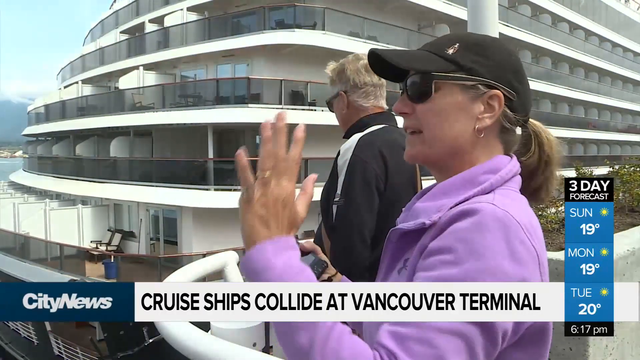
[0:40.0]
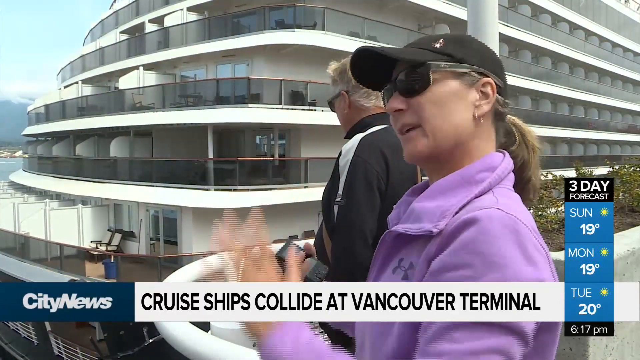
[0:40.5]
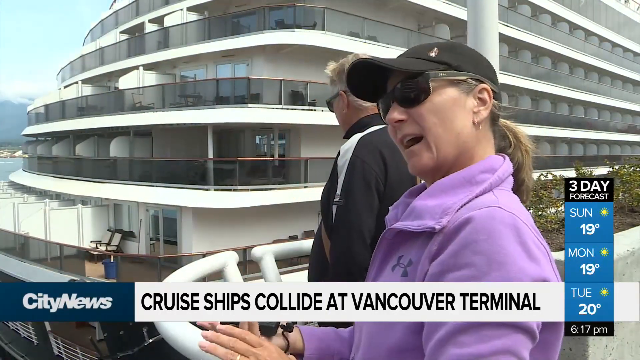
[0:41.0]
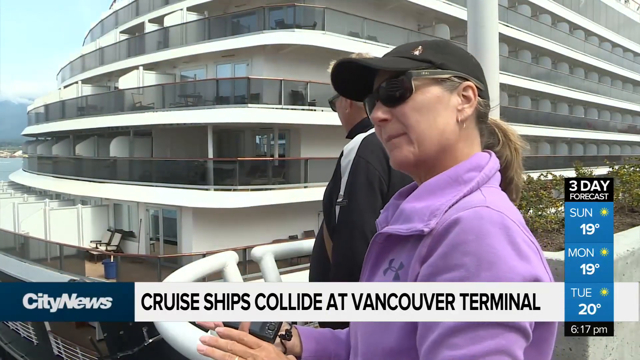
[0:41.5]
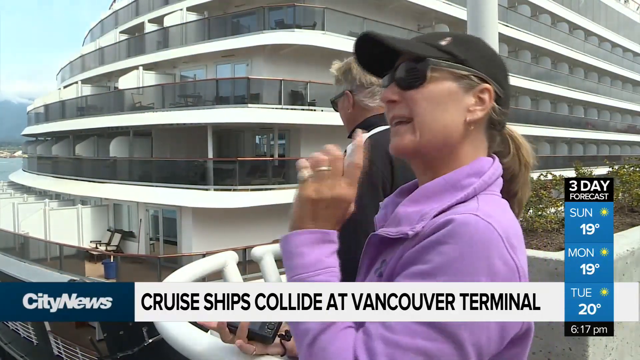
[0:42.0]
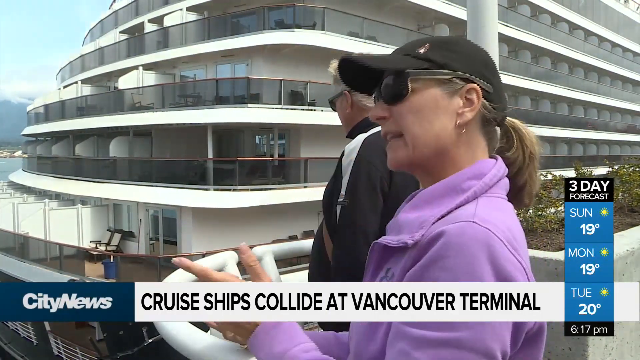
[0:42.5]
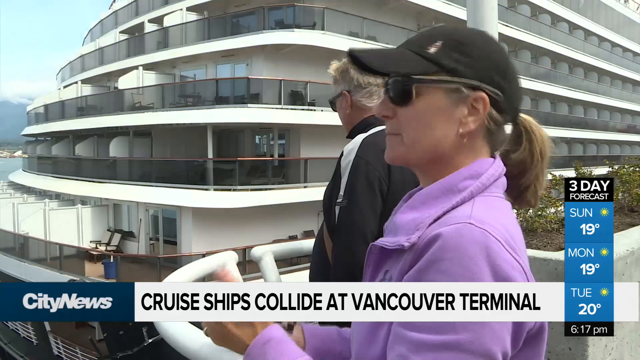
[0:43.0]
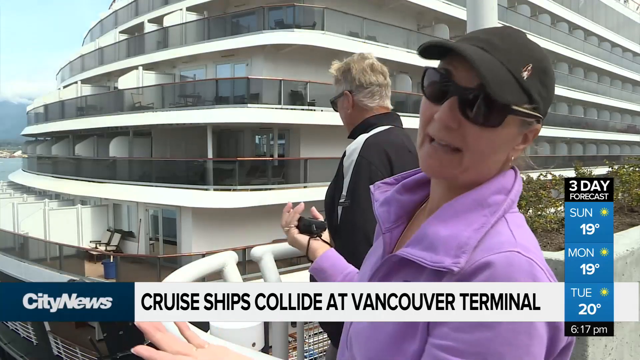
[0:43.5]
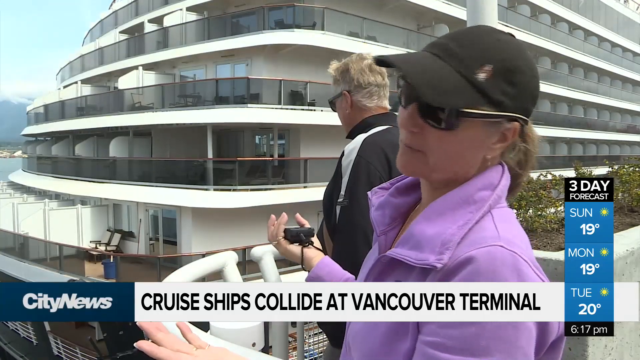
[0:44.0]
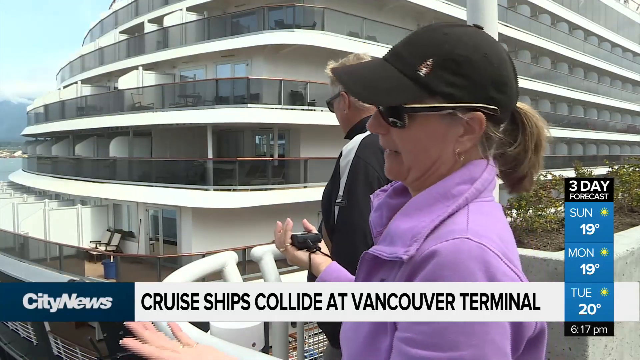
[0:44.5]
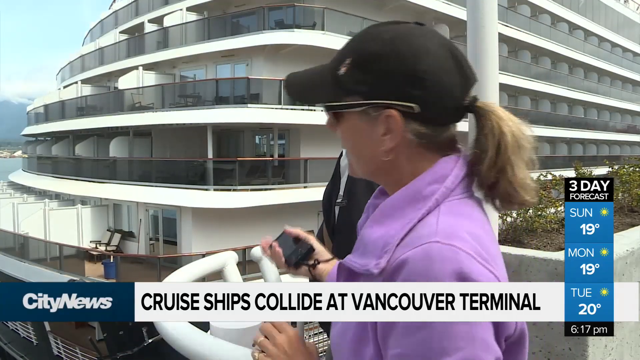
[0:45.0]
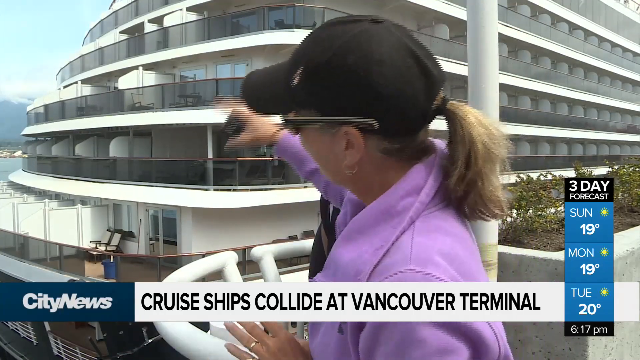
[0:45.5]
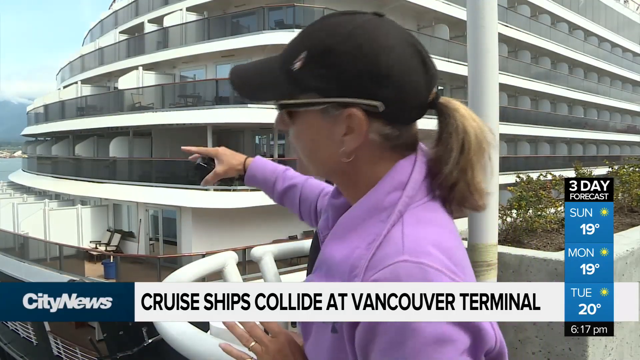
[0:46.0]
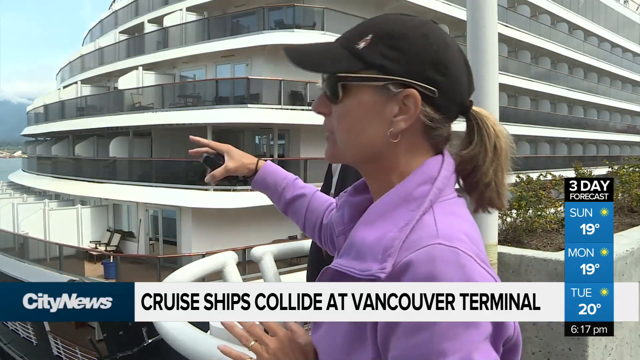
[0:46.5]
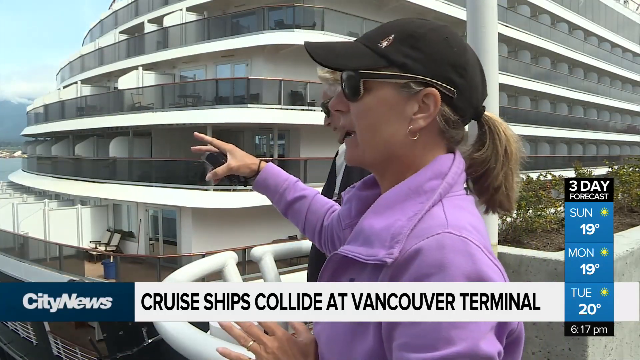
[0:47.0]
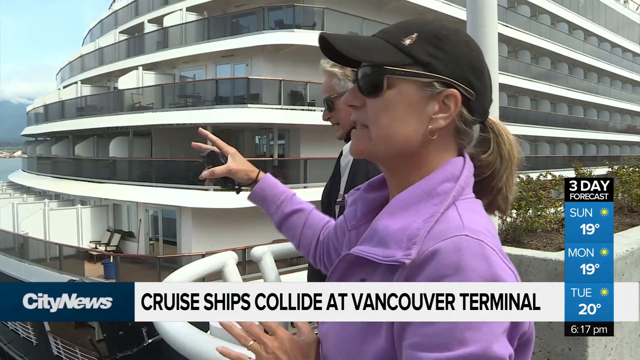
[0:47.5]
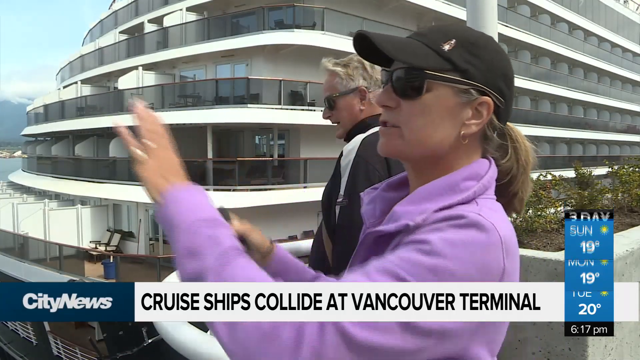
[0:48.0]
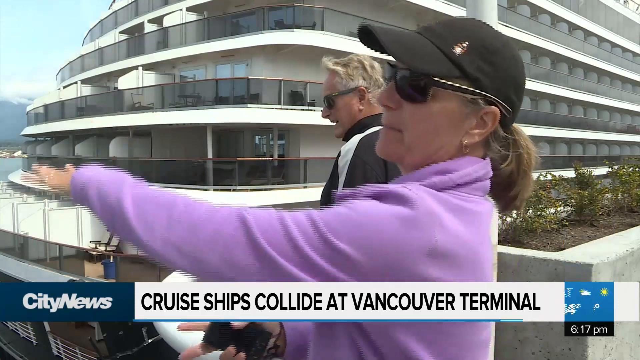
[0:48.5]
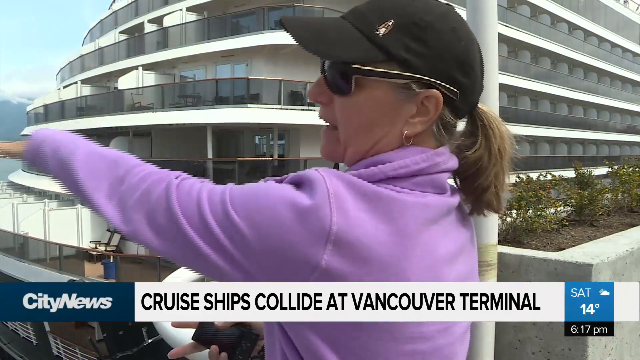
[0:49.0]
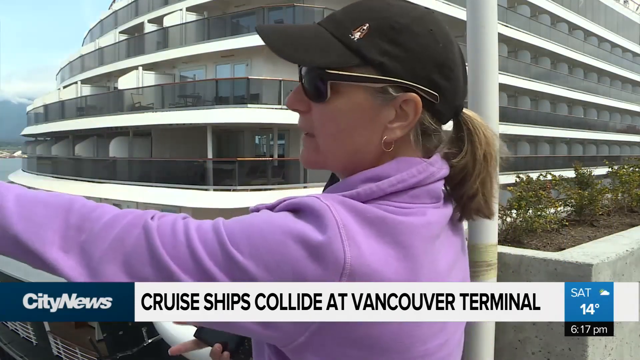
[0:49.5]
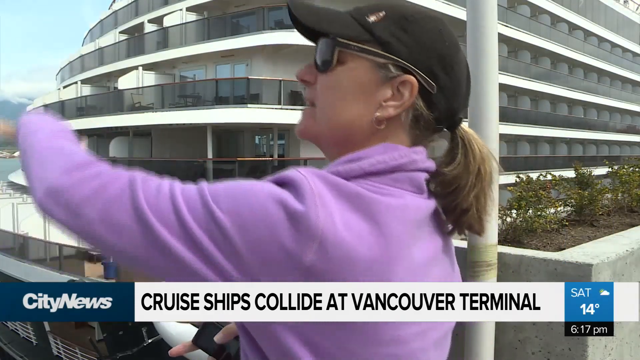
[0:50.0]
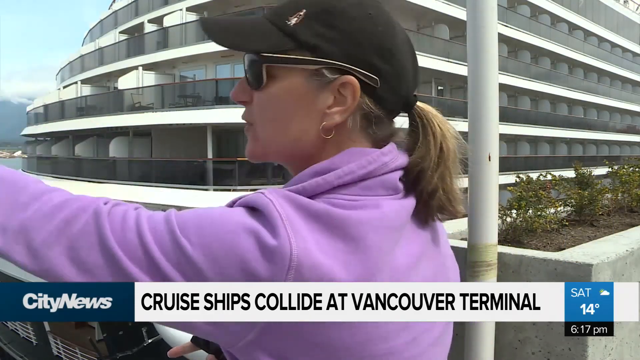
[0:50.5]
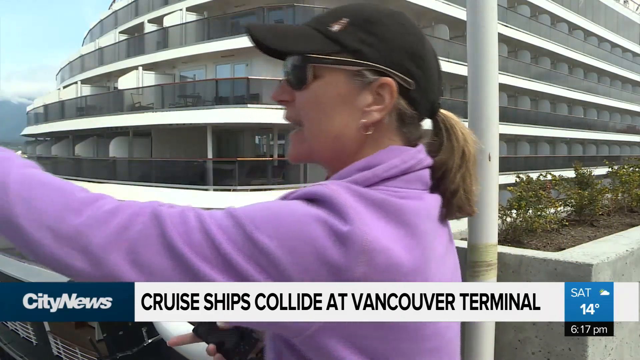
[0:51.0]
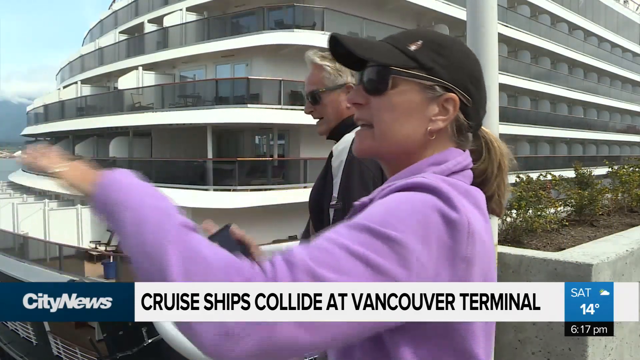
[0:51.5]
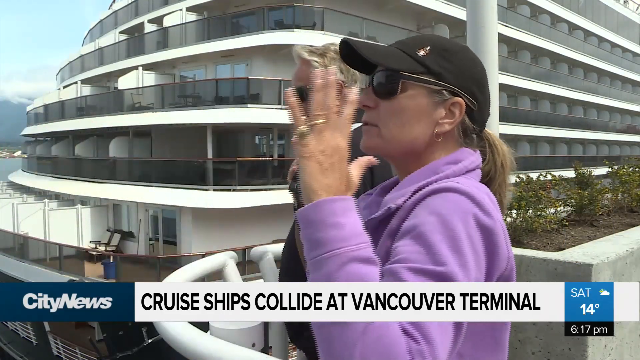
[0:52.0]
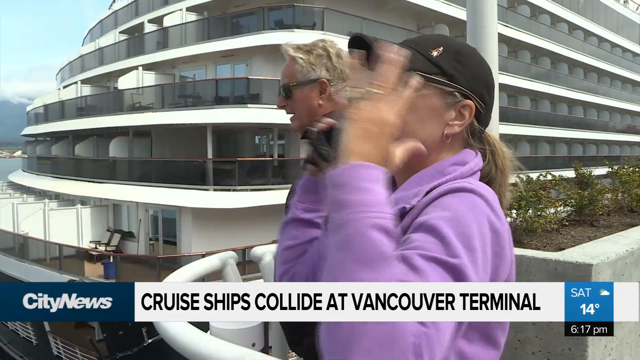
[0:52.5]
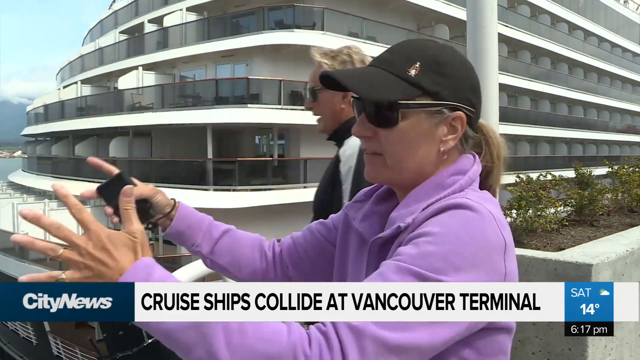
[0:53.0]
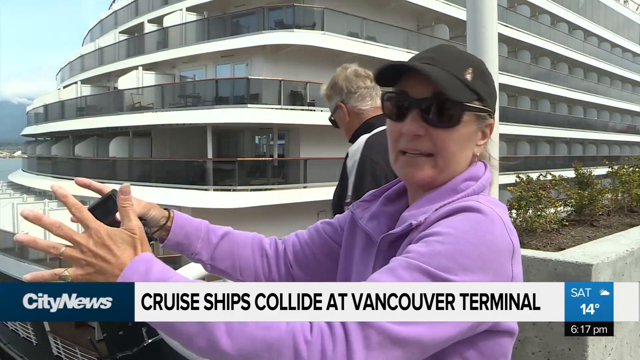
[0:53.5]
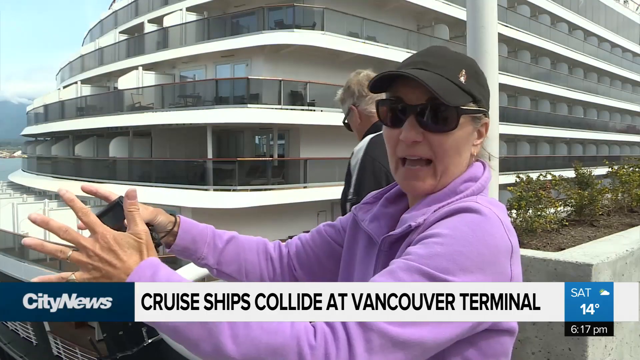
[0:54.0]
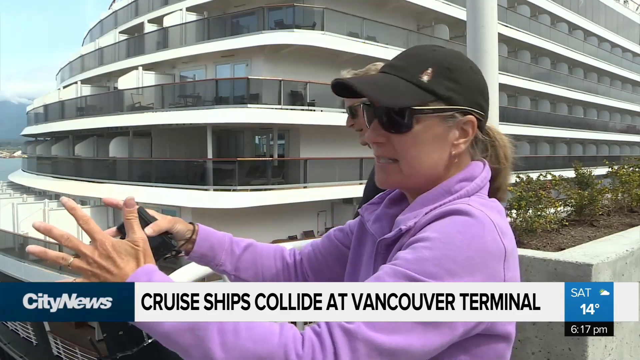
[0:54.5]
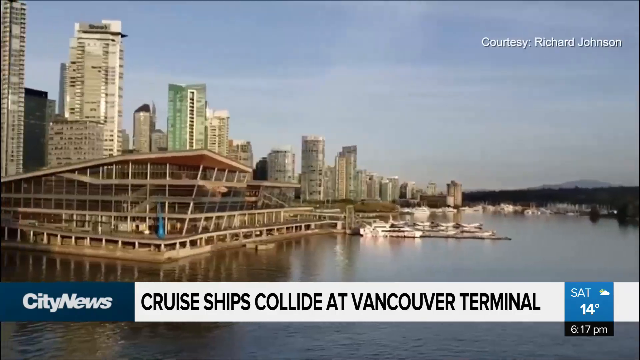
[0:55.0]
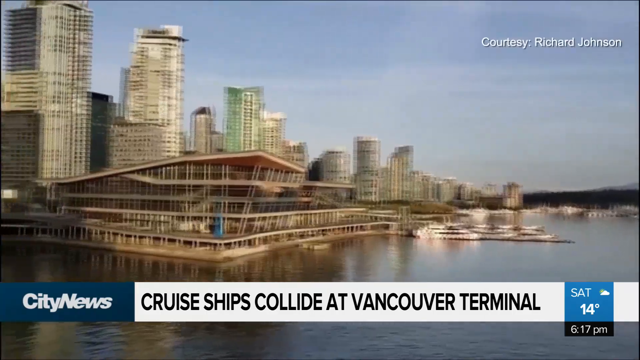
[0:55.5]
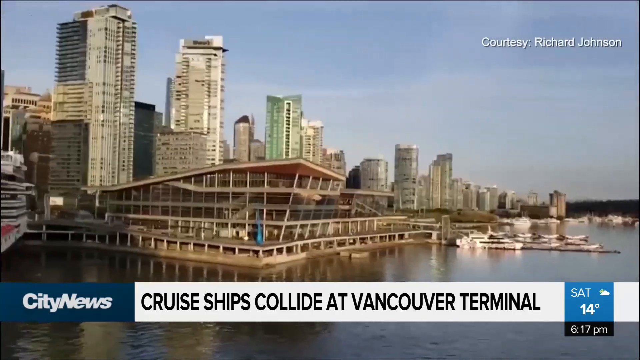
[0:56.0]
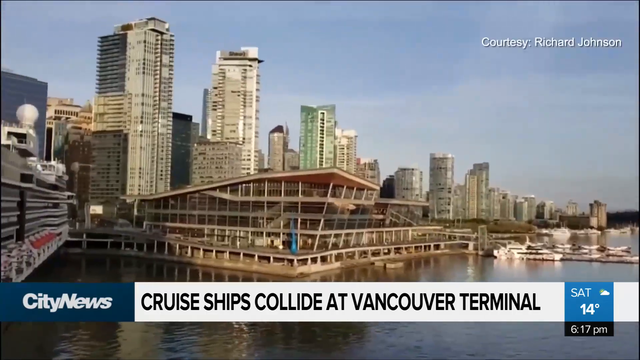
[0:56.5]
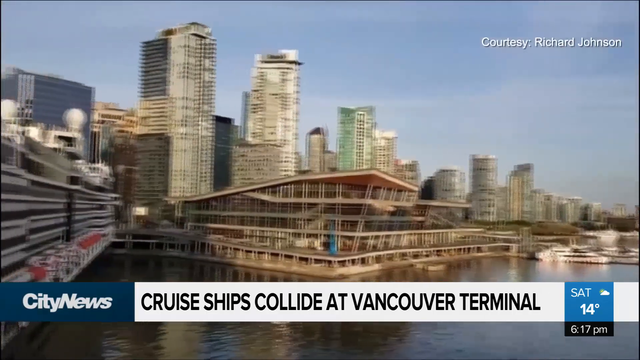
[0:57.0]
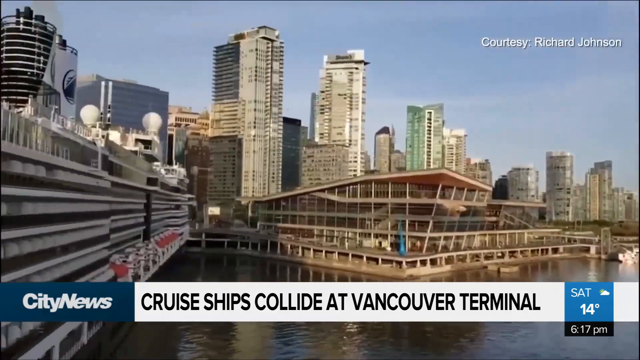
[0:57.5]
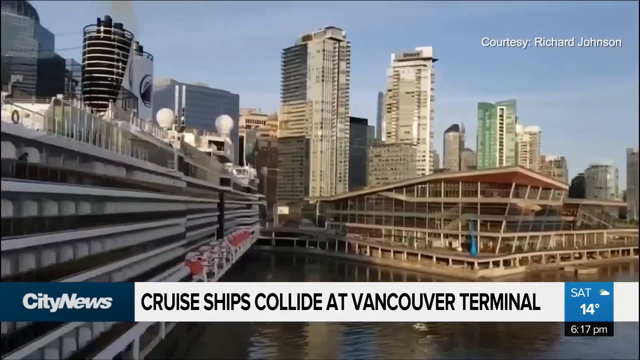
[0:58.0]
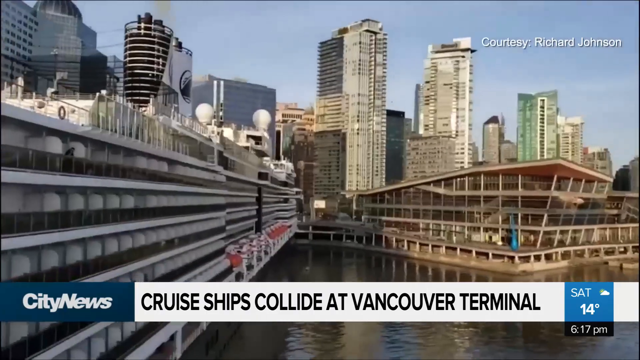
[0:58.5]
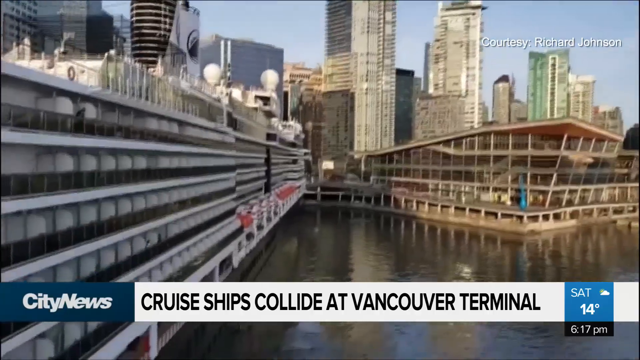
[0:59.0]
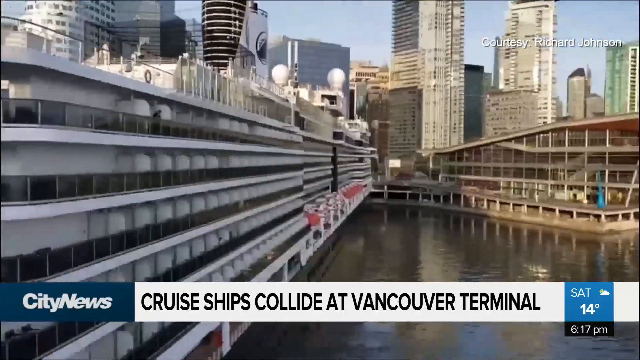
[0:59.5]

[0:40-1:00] The segment cuts to a couple describing what happened. The woman, in her 50s, wears dark sunglasses, a black baseball cap and a light purple sweat jacket, and has a ponytail. She is very animated, waving her hand as she talks. Her husband stands just behind her in a black tracksuit and dark sunglasses; he has grayish hair, is also in his 50s, and listens quietly. They stand at a railing on the dock, and behind them the white, five-level cruise ship, with railings at each level, slowly drifts away as they talk. The banner beneath reads "City News, cruise ships collide at Vancouver Terminal". After five seconds, the video cuts to the cruise ship in Vancouver Bay, drifting a little closer to the docks. It looks like mid-afternoon in the city on a clear day, with the sun shining on the buildings of downtown Vancouver. The five-level ship looks very big in the bay and drifts away from the camera towards the city.